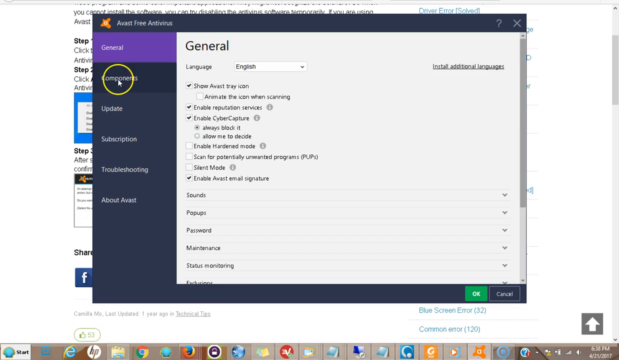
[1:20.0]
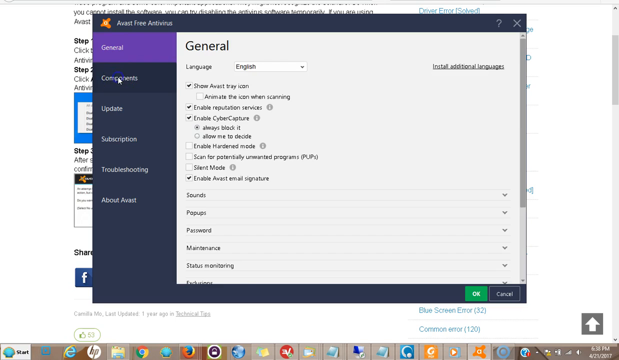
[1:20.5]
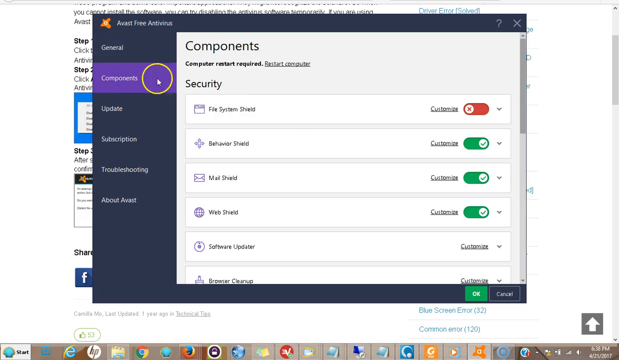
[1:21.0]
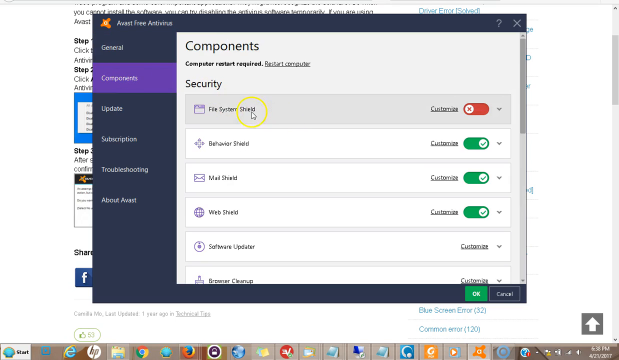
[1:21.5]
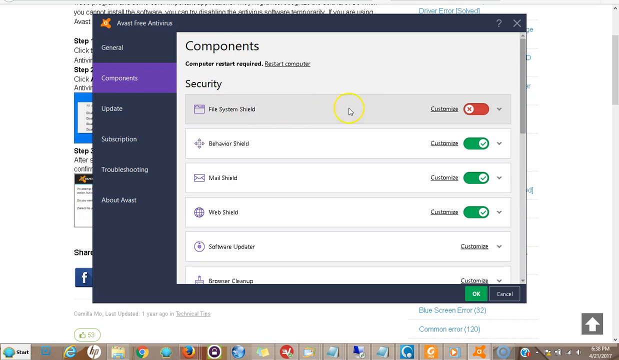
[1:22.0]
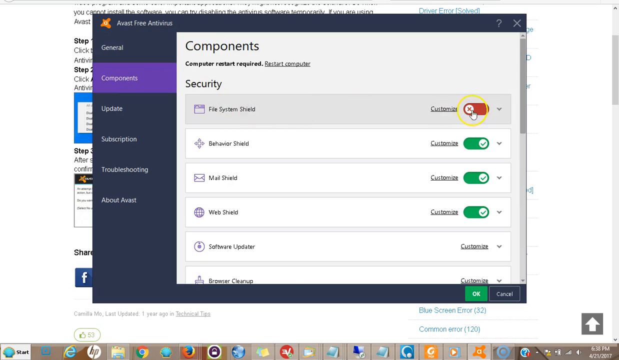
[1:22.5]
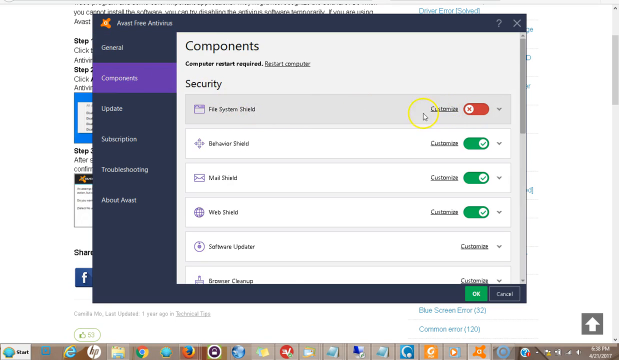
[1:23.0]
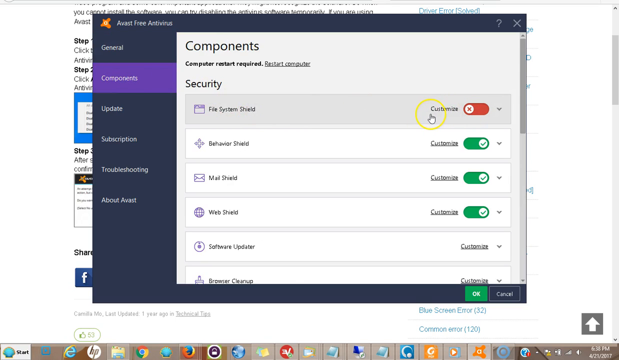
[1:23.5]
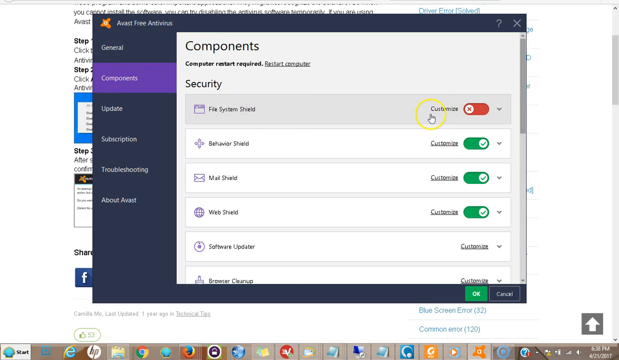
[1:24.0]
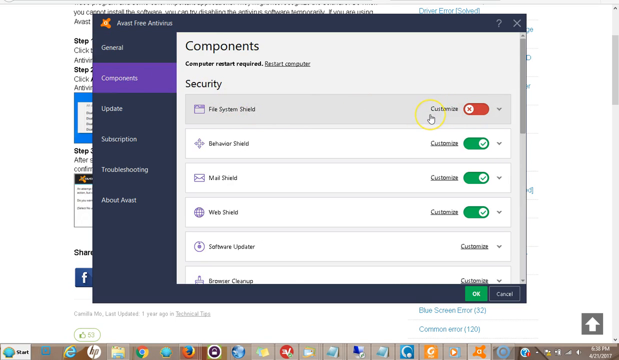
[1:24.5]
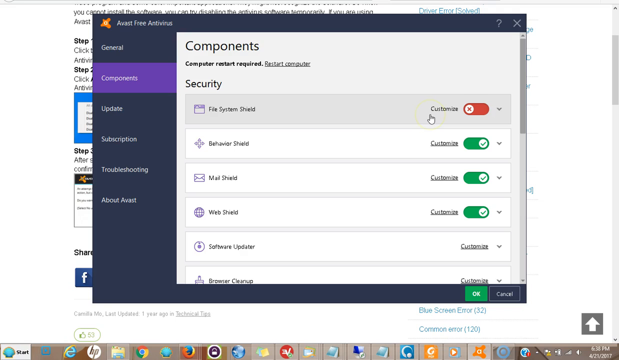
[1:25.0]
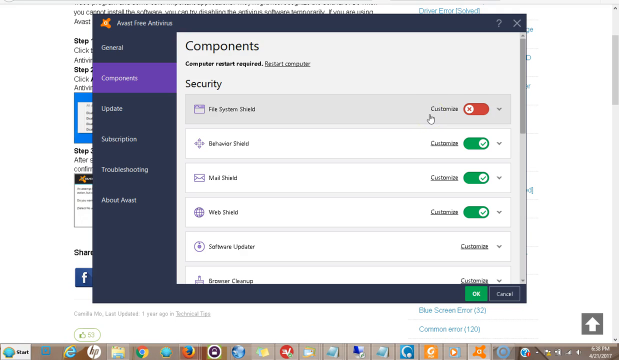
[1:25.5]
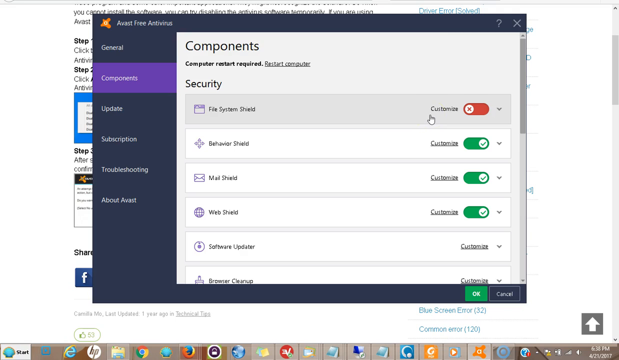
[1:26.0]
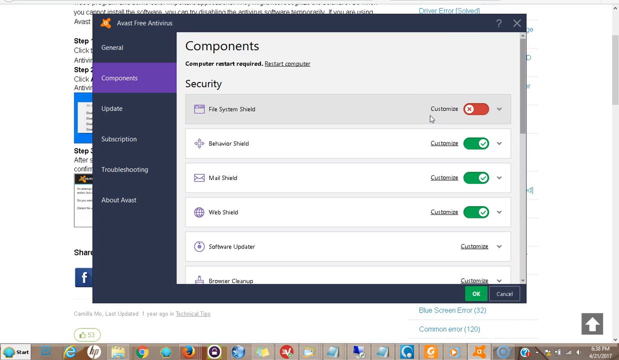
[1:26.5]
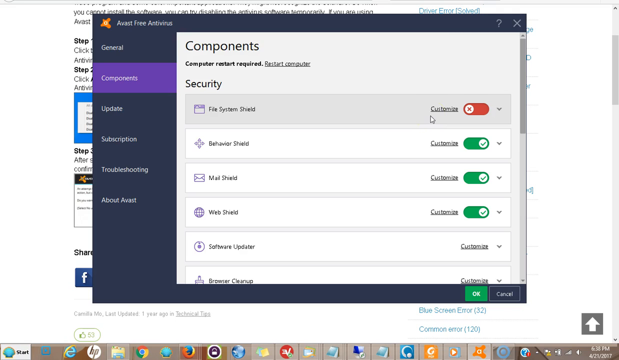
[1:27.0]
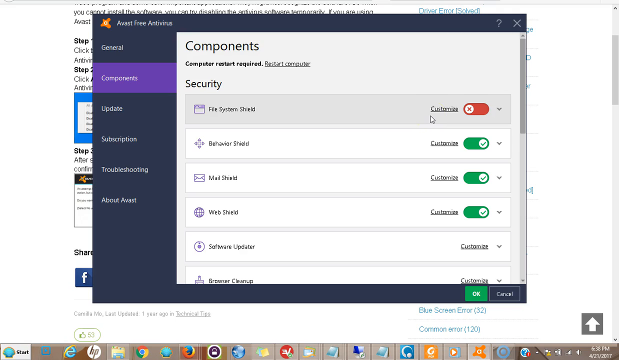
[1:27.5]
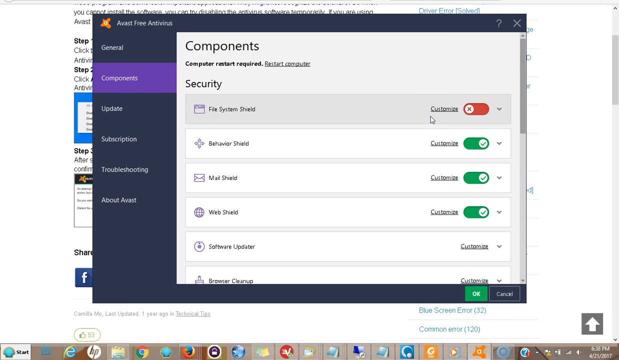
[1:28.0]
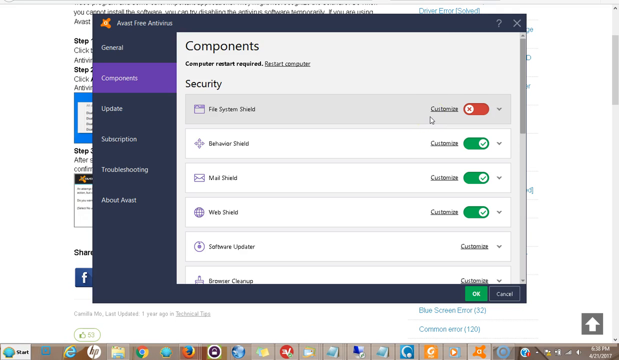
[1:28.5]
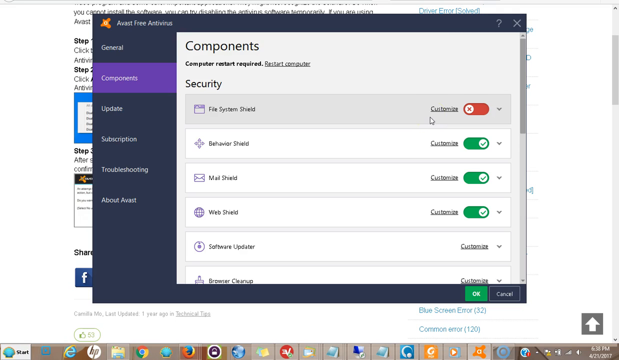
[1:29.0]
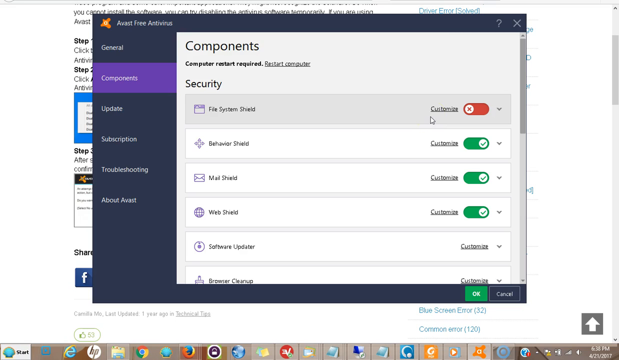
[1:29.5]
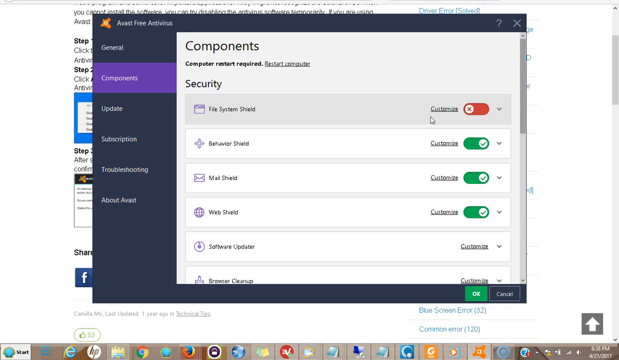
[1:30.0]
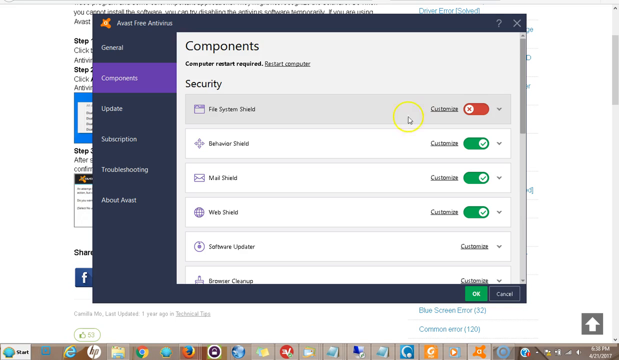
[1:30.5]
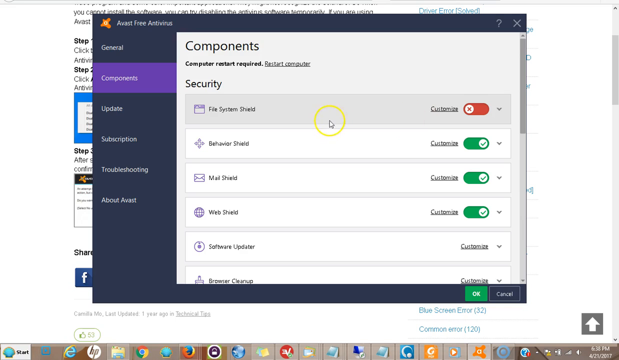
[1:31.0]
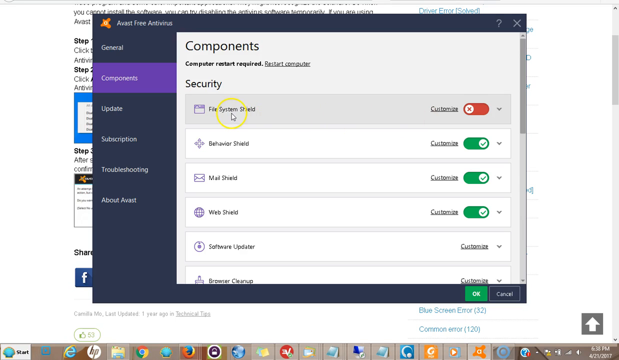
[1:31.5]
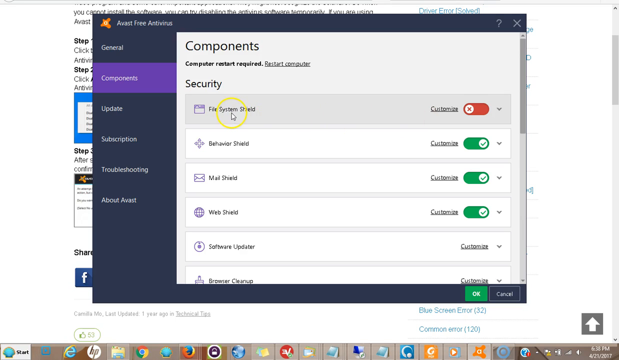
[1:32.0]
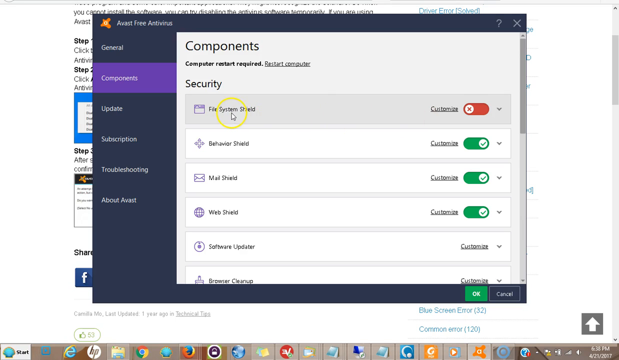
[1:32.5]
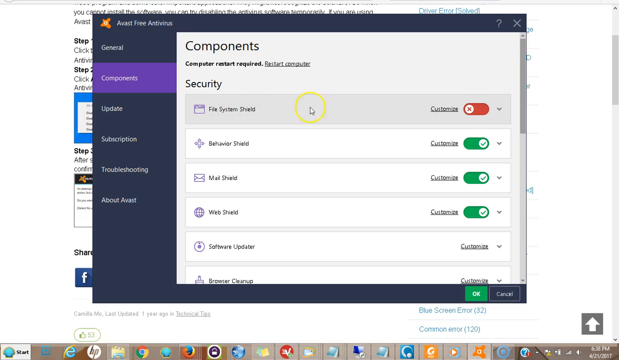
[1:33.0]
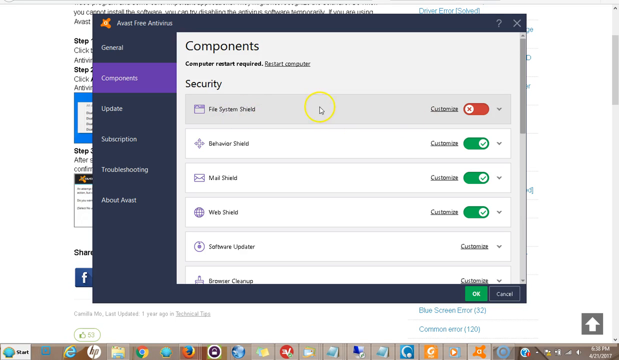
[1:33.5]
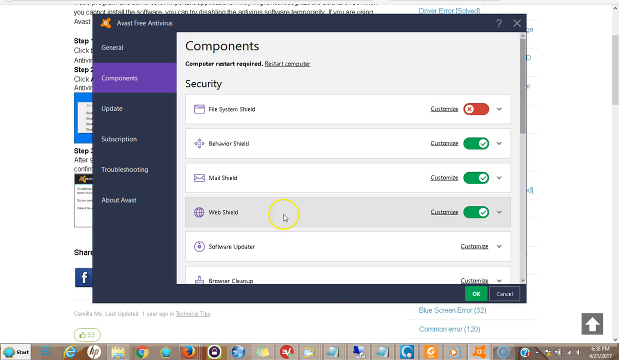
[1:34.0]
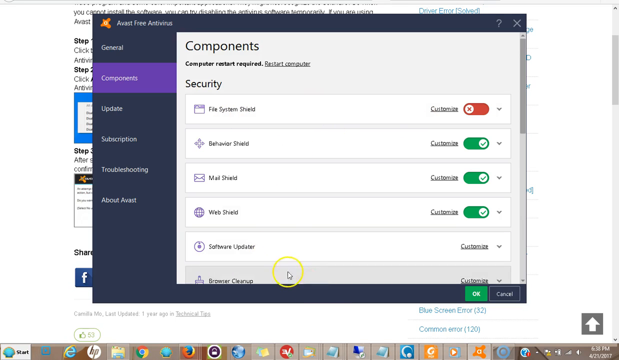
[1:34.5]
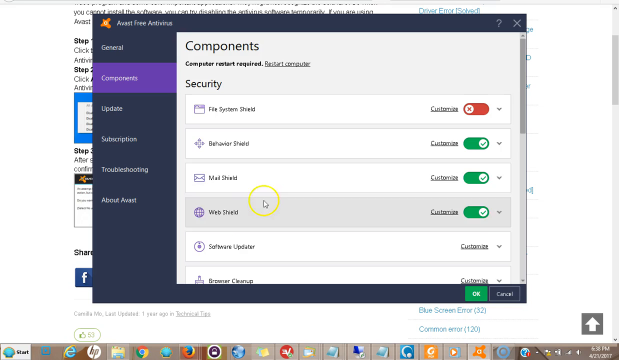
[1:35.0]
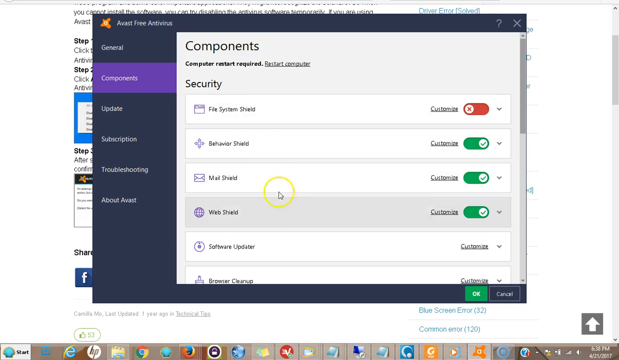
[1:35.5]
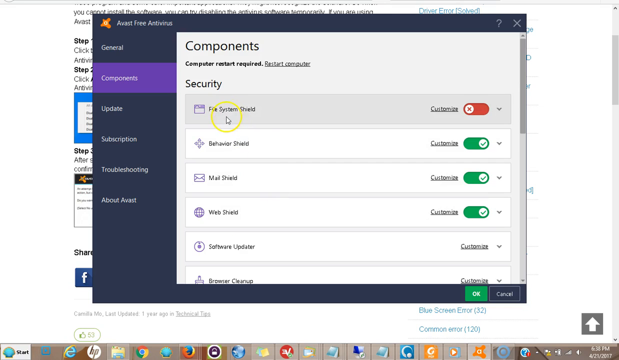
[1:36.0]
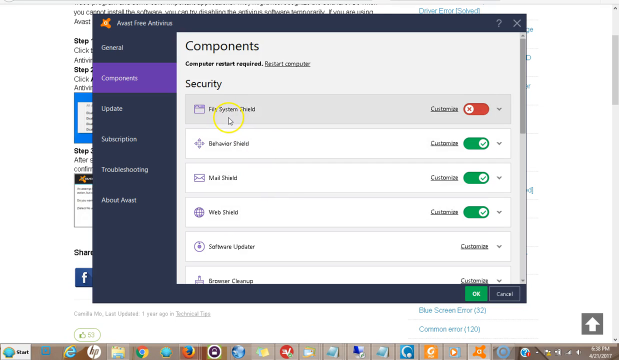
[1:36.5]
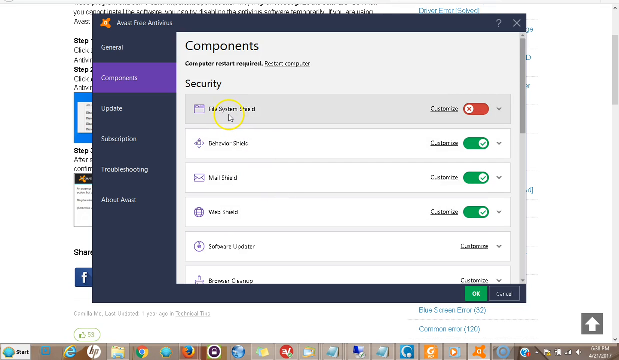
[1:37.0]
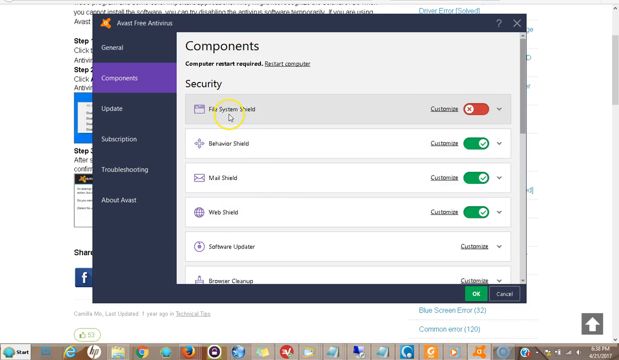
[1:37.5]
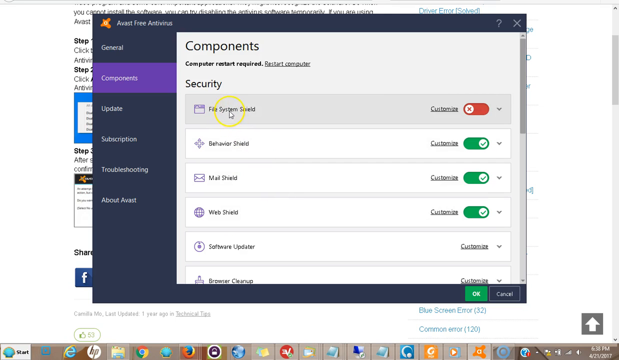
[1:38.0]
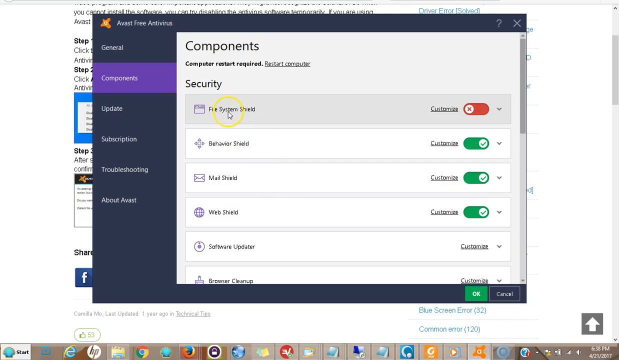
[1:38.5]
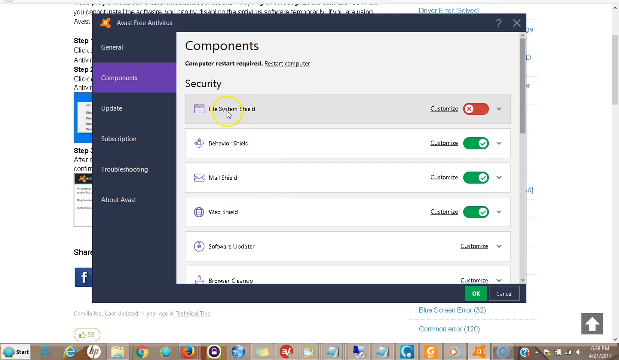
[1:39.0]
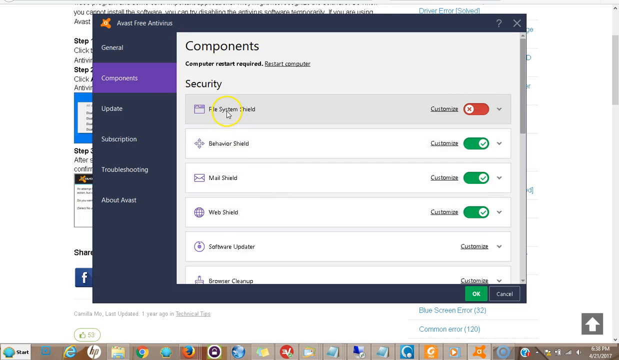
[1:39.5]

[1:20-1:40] The user goes back to components and looks at the file system shield, hovering the mouse over its customize portion before stopping. The mouse goes back over file system shield and moves up and down several times. Before components is clicked, the General tab is shown, containing more information. First is a Language option with English selected and more available through a drop-down menu, and on the right a button that says "Install Additional Languages." Below are several options with drop-down menus that are not currently expanded. Among the settings are an option to show Avast as a tray icon, a secondary checkbox to animate the icon while scanning, "Enable Reputation Services," which is checked, and "Enable Cyber Capture," also checked, with "always block it." "Enable Hardened Mode" is not checked, nor are the next two, "Scan for Potentially Unwanted Programs" and "Silent Mode." The last one, "Enable Avast Email Signature," is checked.